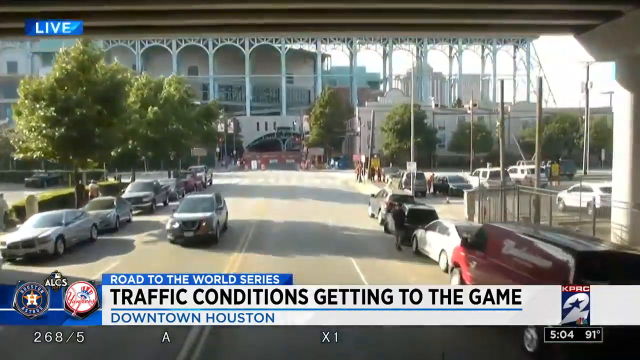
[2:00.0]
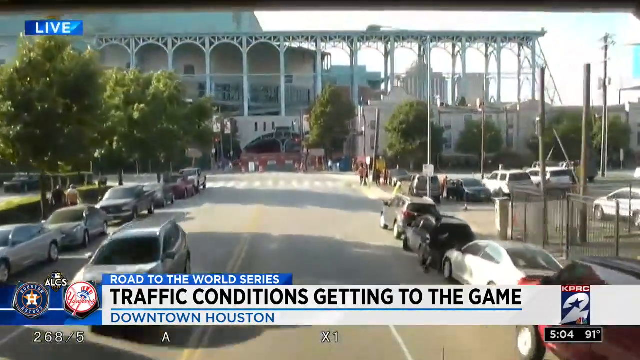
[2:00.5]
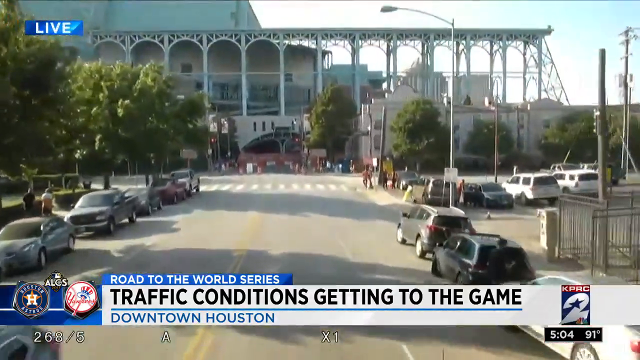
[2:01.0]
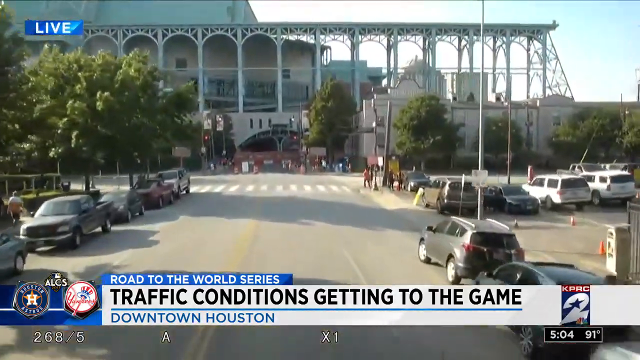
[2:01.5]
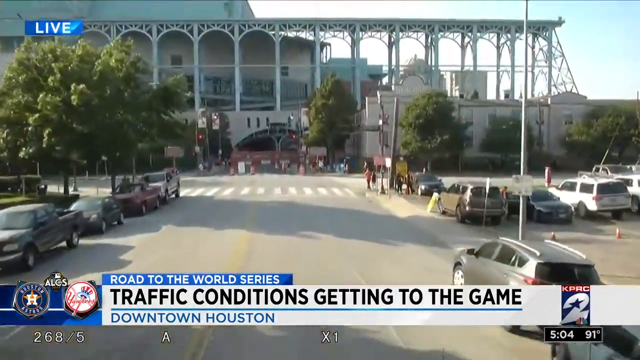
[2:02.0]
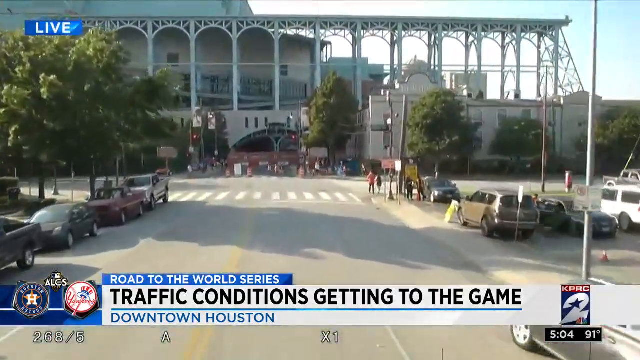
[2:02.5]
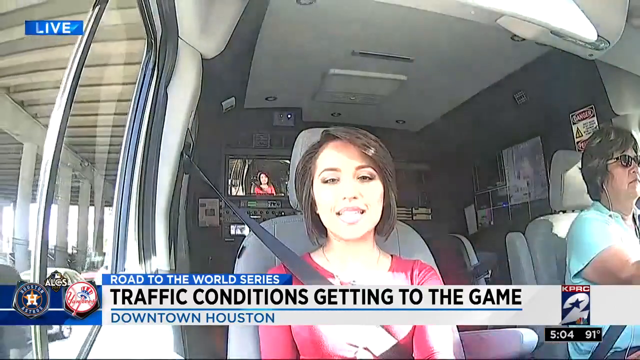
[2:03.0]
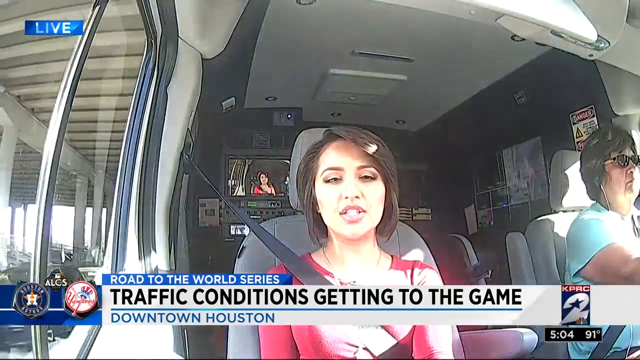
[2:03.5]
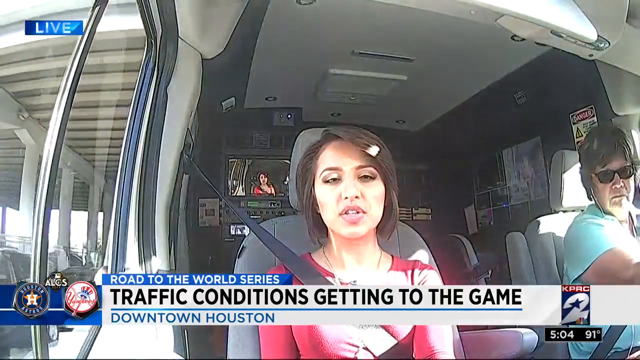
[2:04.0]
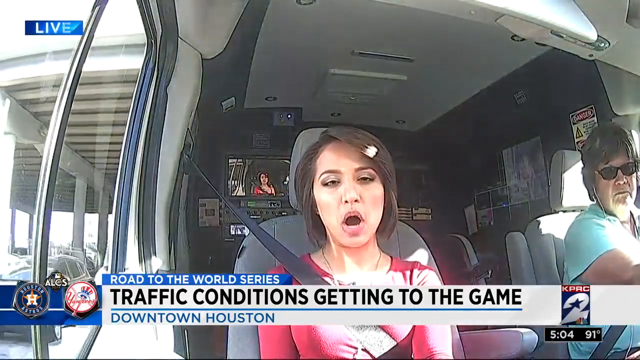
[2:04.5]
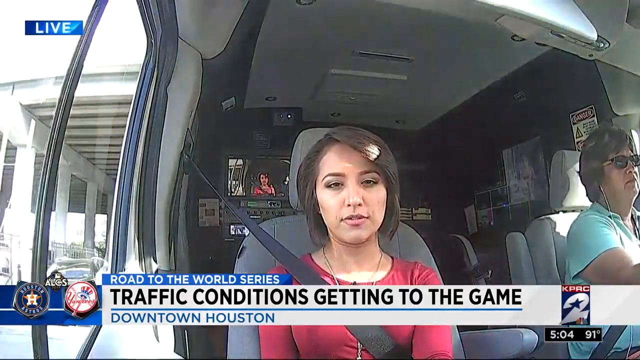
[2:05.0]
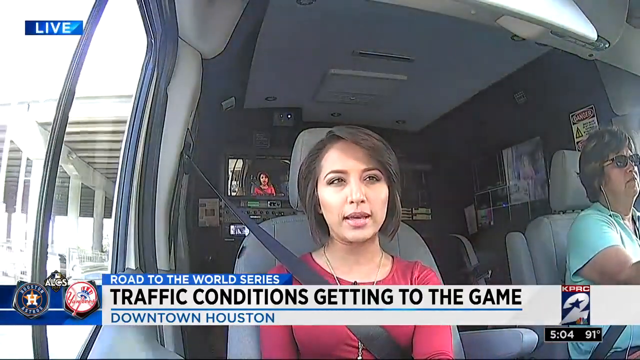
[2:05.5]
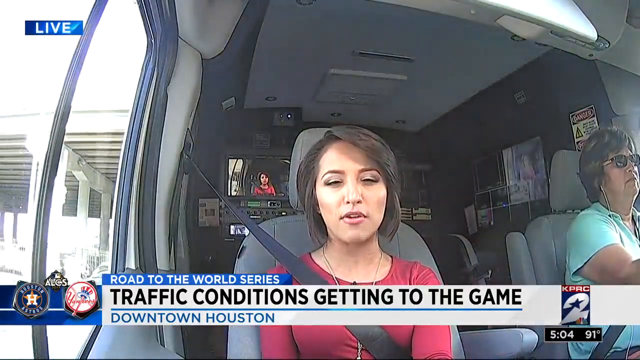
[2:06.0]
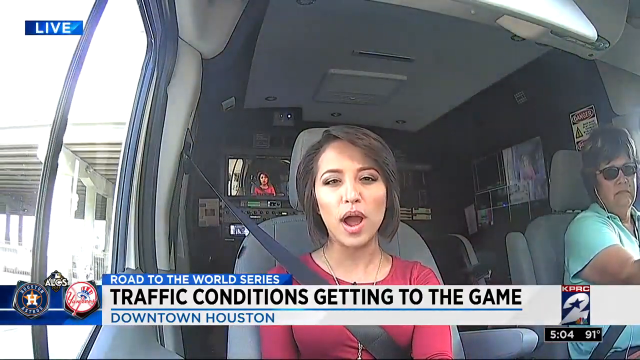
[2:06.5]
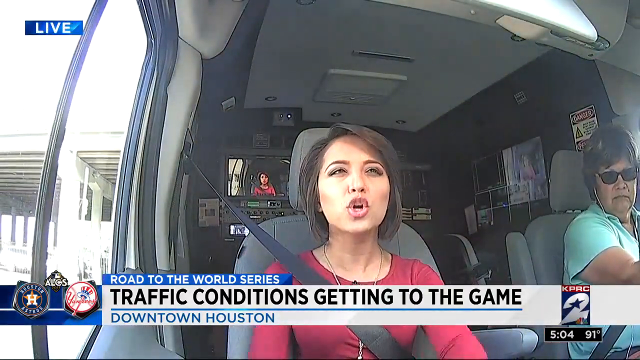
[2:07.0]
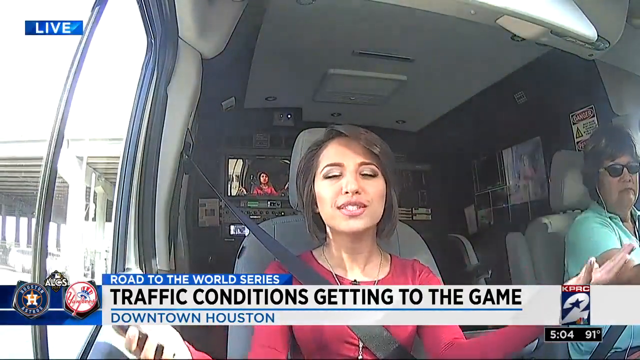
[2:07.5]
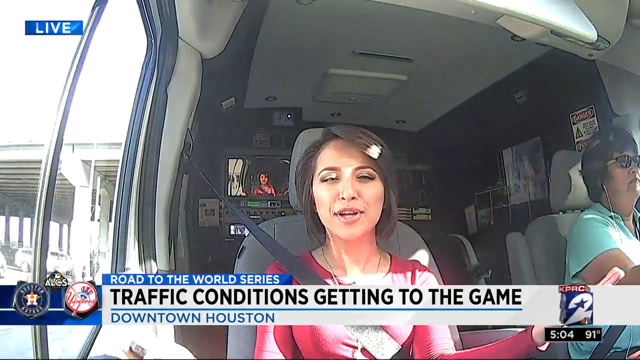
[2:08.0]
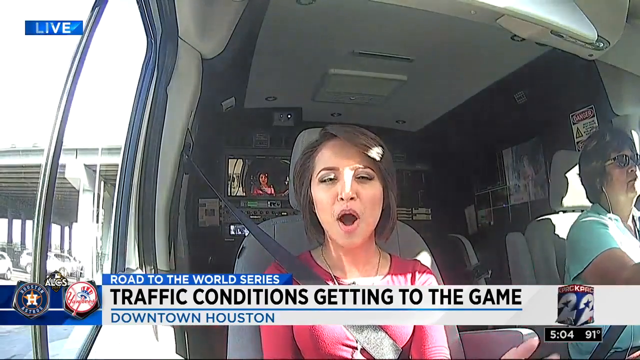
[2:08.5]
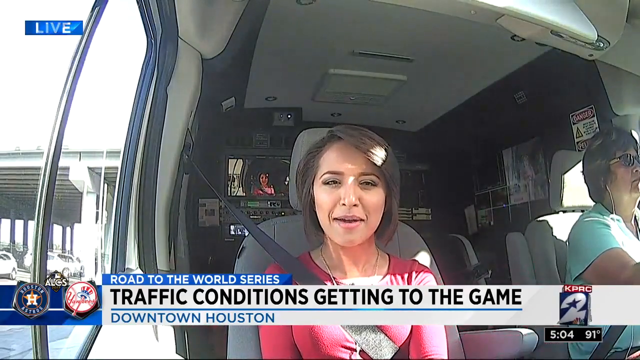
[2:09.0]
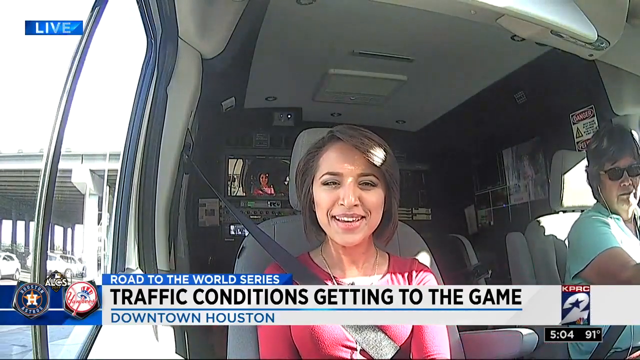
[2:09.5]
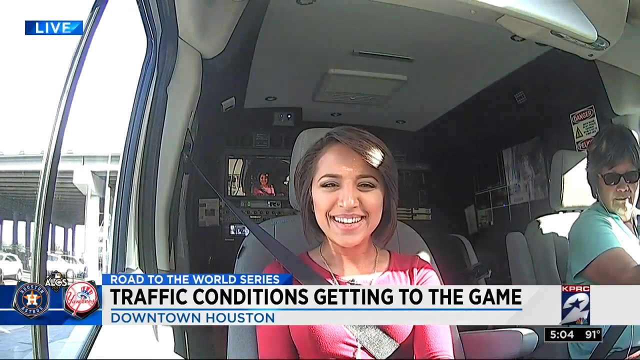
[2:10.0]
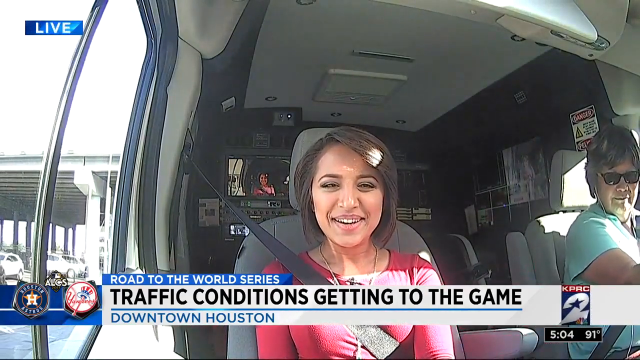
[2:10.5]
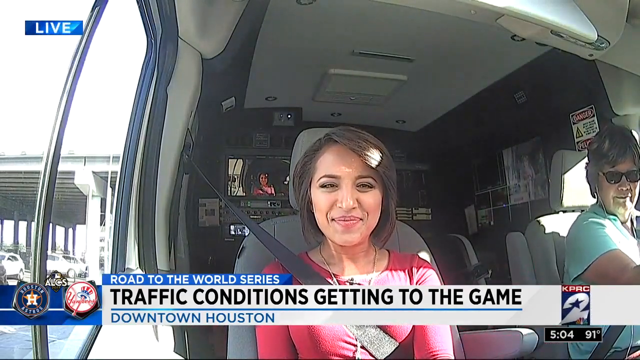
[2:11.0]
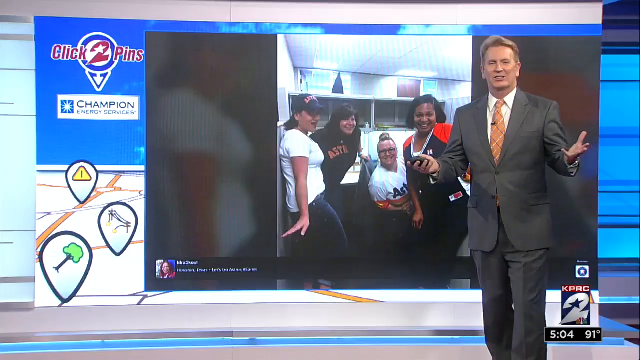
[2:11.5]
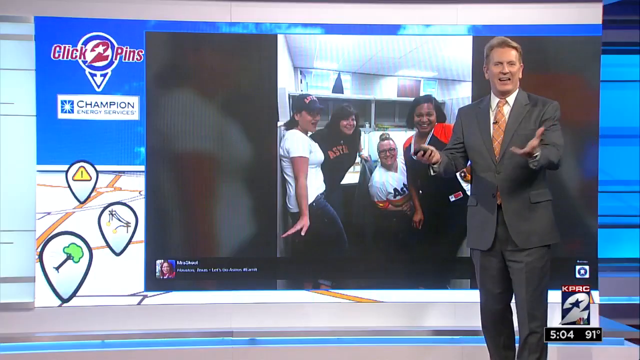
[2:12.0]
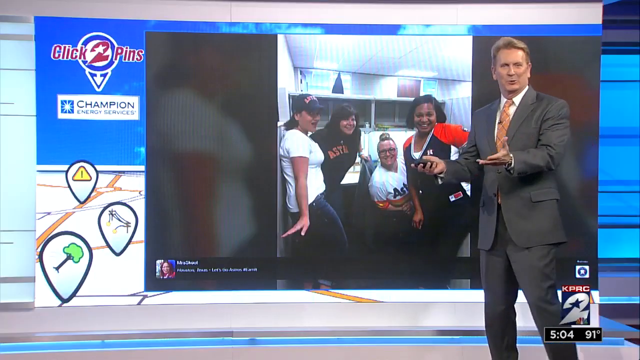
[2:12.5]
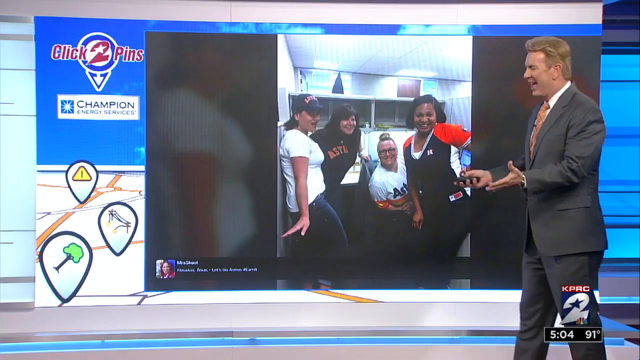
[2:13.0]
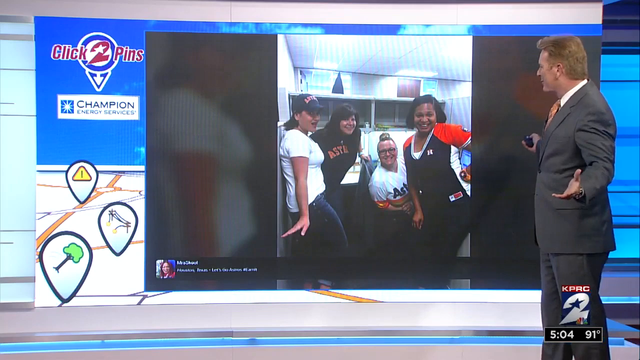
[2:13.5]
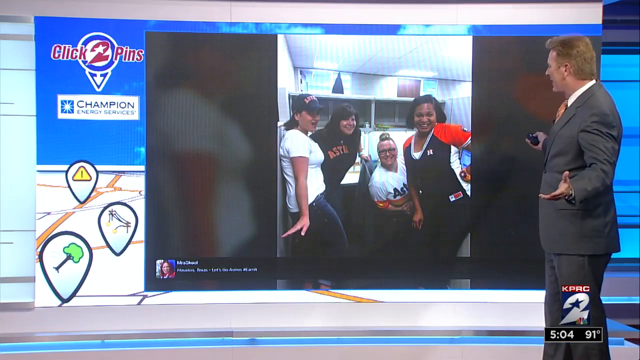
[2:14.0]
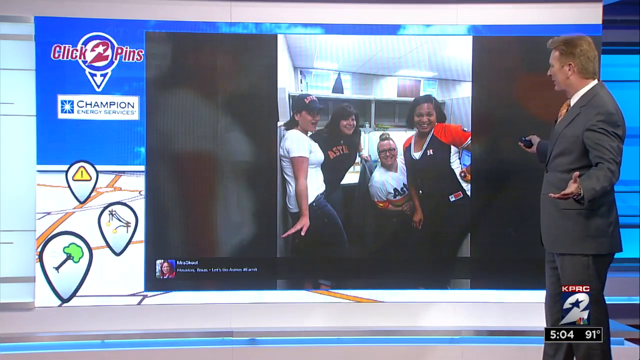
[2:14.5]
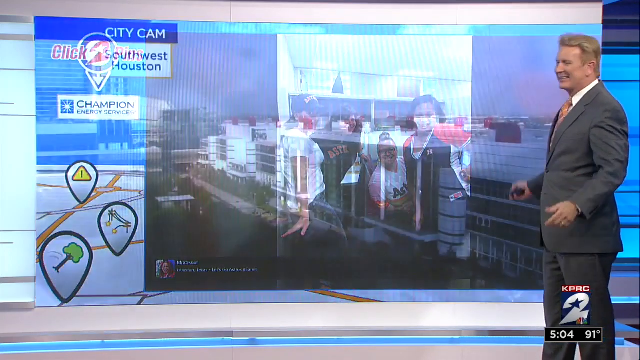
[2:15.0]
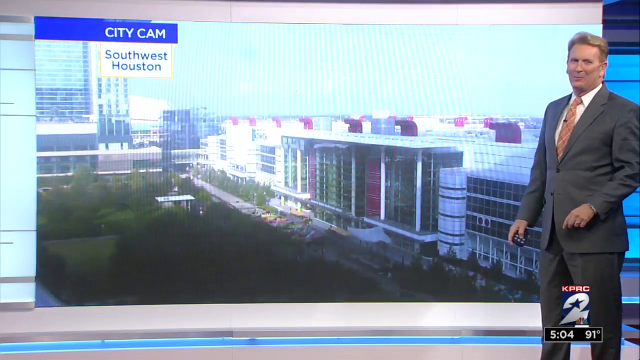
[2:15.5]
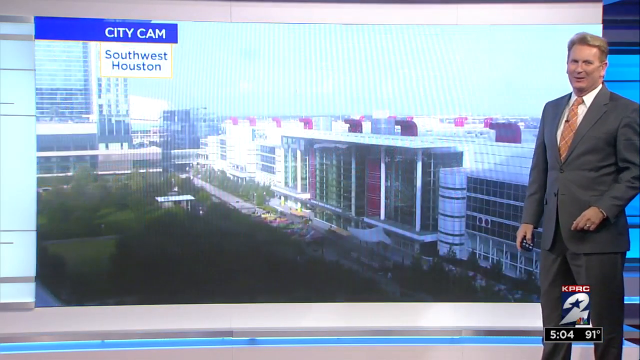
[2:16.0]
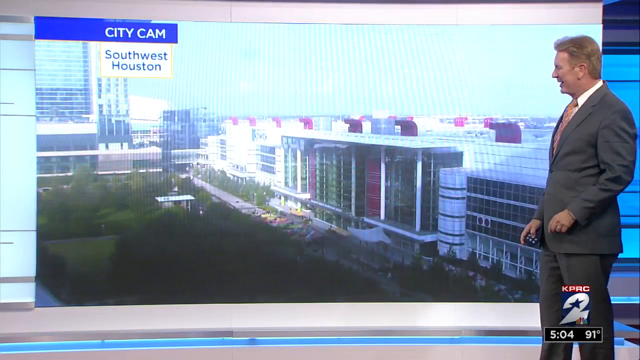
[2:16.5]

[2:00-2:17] The vehicle with the camera emerges from underneath the bridge. Up ahead is a building with a very big structure coming off it to the right that looks like an awning. Vehicles are parked on the other side of the street, a crosswalk is coming up, there is a car park to the right, and there are trees on the left. The video cuts back to the reporter in the news van, who looks at the camera, with "live" at the top left of the screen. The person driving to her right is now visible as a woman wearing dark sunglasses and a green top. The reporter smiles and looks at the screen. The video then cuts to a studio, where a man with short blonde hair, wearing a grey suit and an orange tie, stands in front of a screen. On the left of the screen is text with "champion energy services" beneath it, and below that are icons including a warning sign, a tree and one that cannot be made out. The screen behind the man shows a recording of four people indoors, in an unidentifiable place: on the left a lady in a white top and blue pants, next to her on the right a lady in a black hoodie with a logo on the front, then a woman with blonde hair in a bun wearing a white top, and to her right a Black lady in a black and red top. They are all looking at the camera and smiling. The man gestures and turns around to speak to the ladies behind him. The view then pans away, the screen and the ladies disappear, and a big white building with tall glass windows and red funnels on the roof appears. In front of it are trees, across from the trees is a road, and across the road is a lot of greenery, possibly a park. At the far left are high-rise buildings with lots of glass windows. The man looks back at the camera.